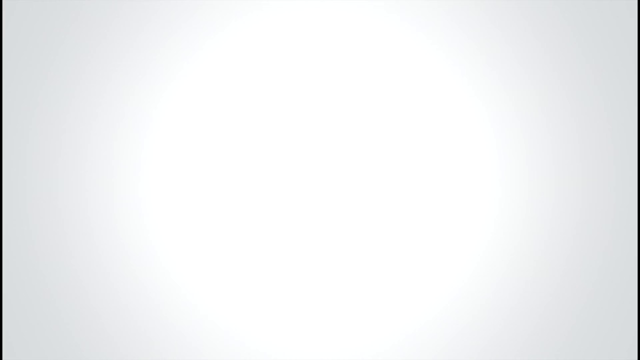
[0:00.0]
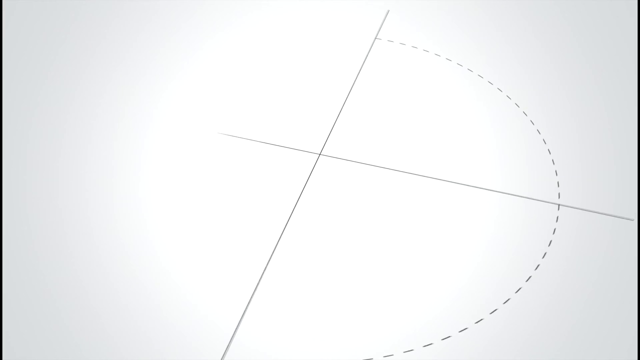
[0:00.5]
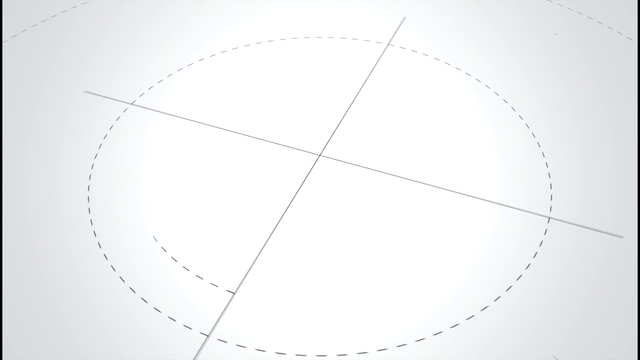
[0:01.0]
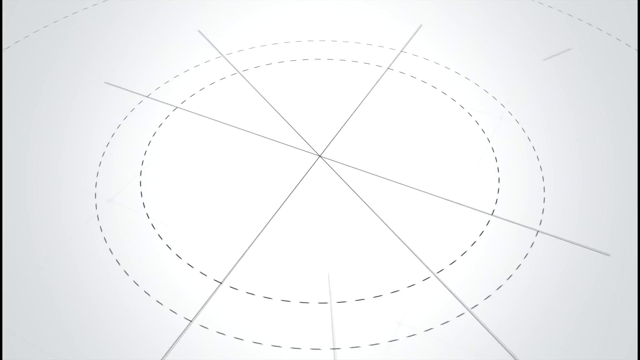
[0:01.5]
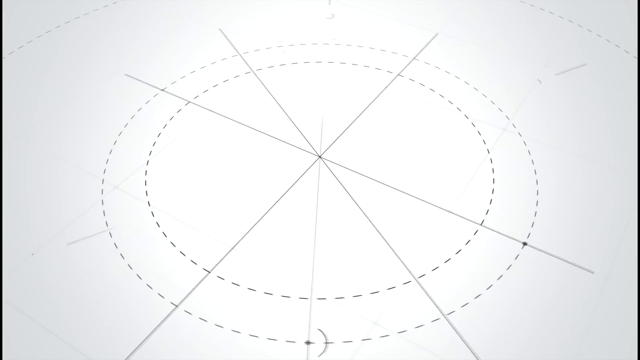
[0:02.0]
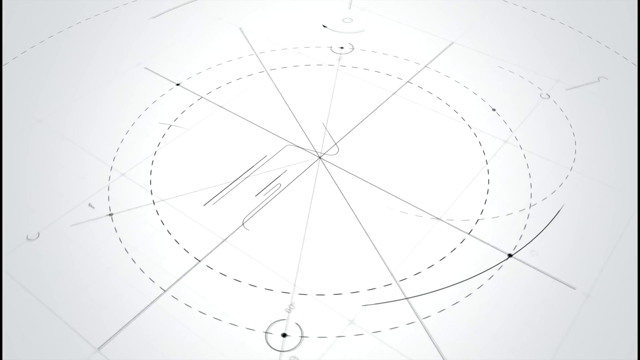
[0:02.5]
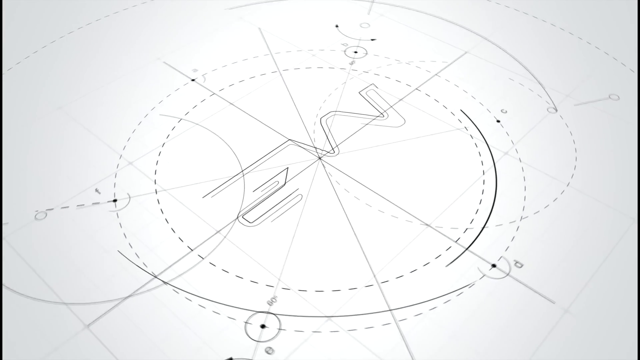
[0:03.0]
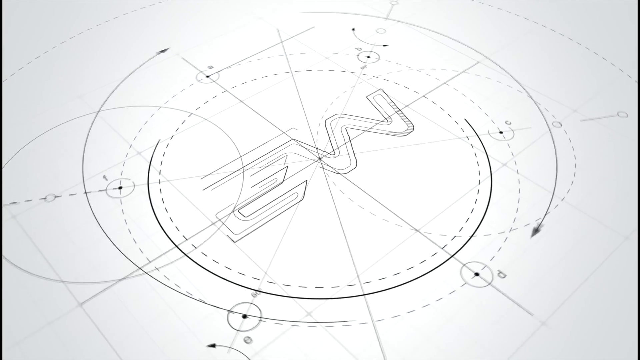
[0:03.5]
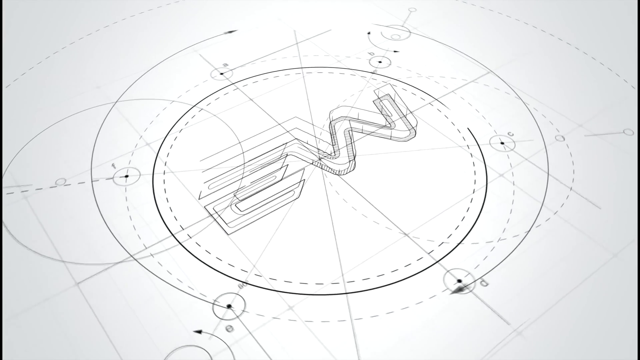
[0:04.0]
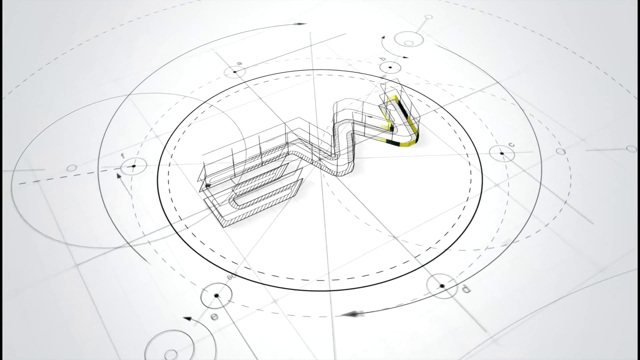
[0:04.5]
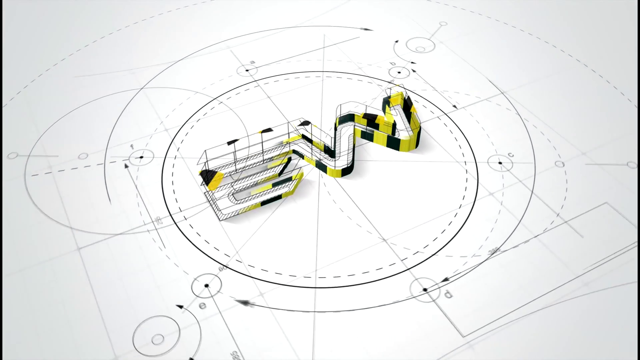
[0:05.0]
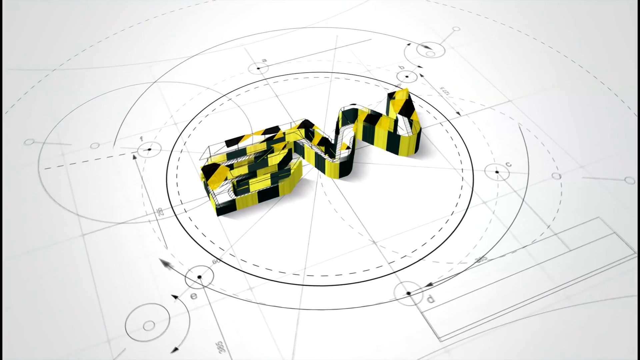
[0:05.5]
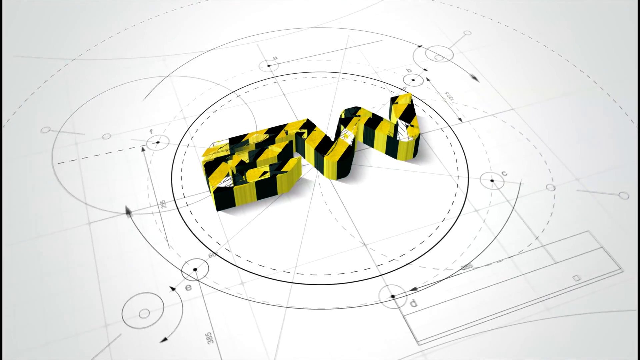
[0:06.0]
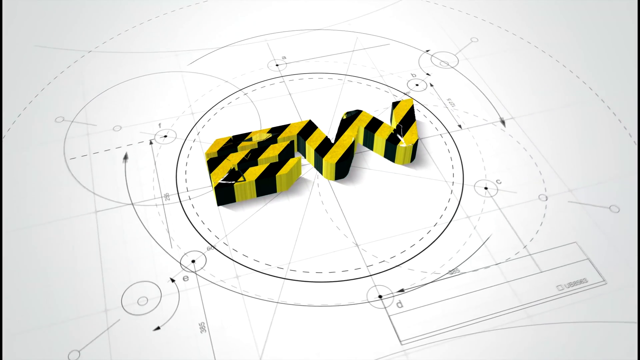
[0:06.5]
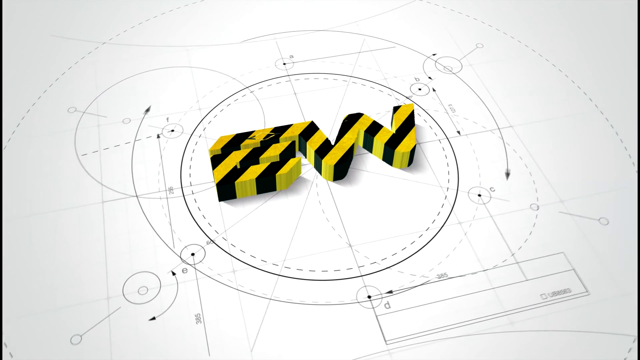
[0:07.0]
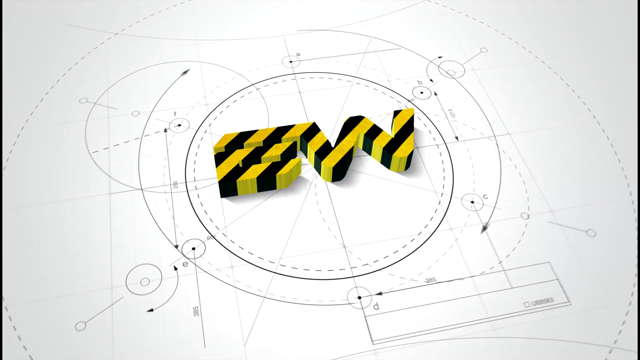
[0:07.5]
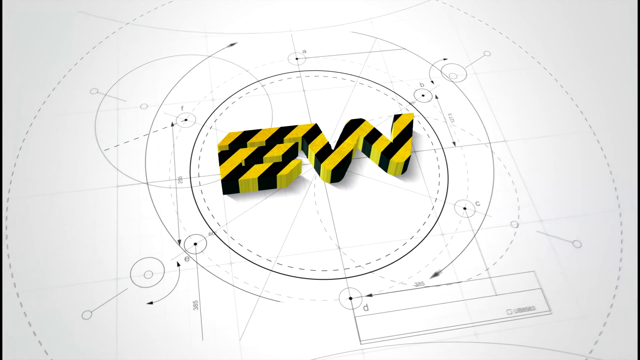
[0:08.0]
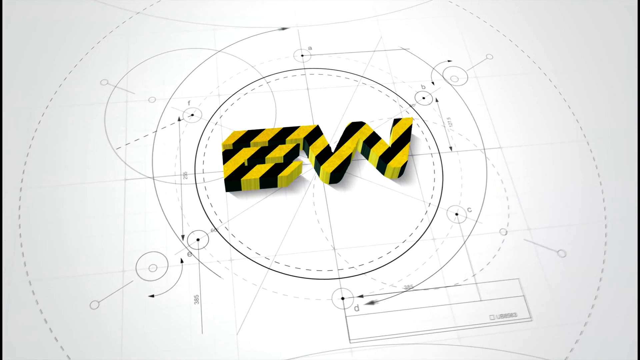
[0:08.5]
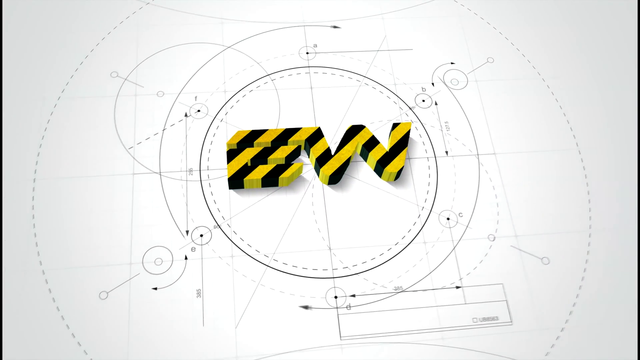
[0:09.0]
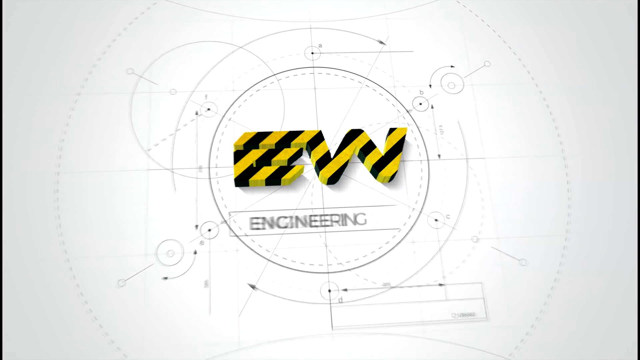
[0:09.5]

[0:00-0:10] A design on a white background spells out a word that appears to be "EW", in yellow and black, with a grid of sorts made of circles behind it. Text reads "engineering world", apparently the name of the company or the topic of the video.